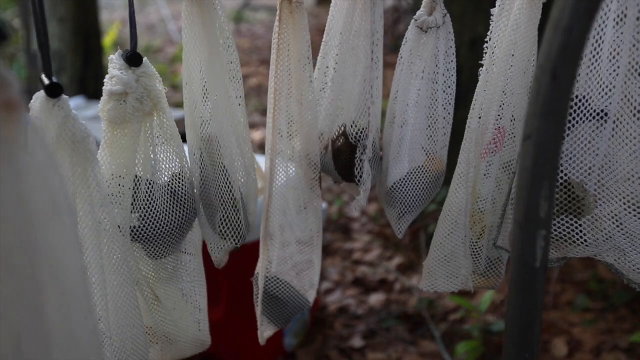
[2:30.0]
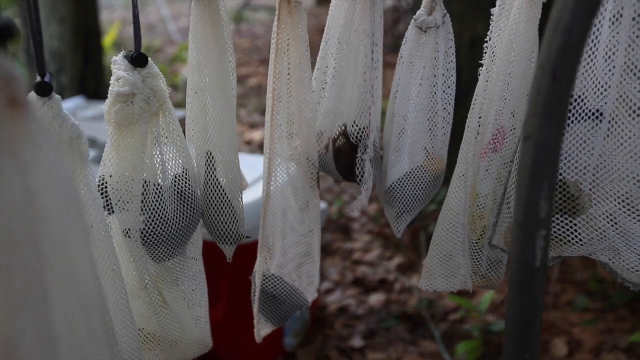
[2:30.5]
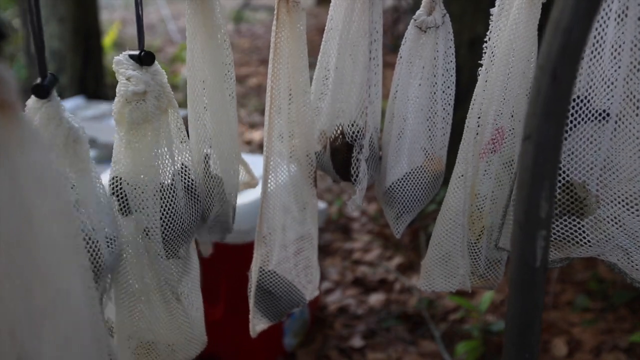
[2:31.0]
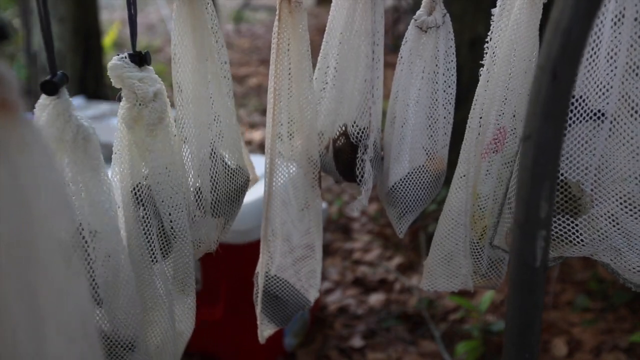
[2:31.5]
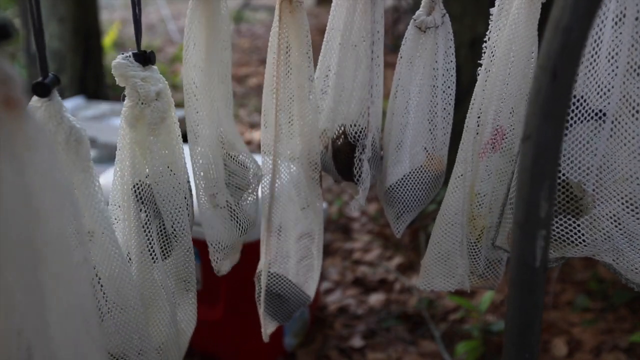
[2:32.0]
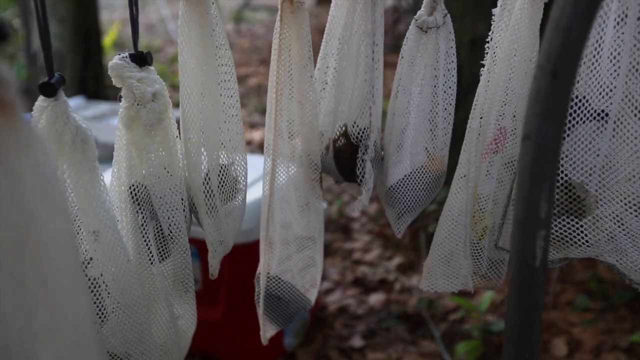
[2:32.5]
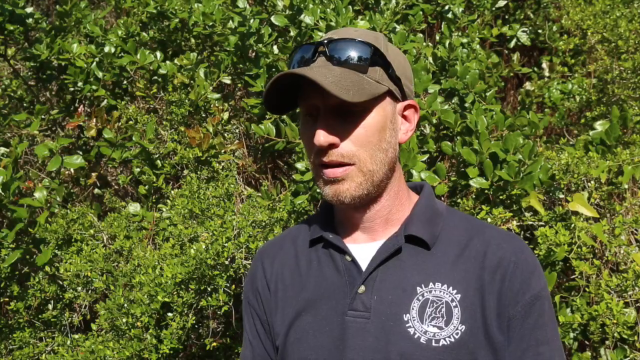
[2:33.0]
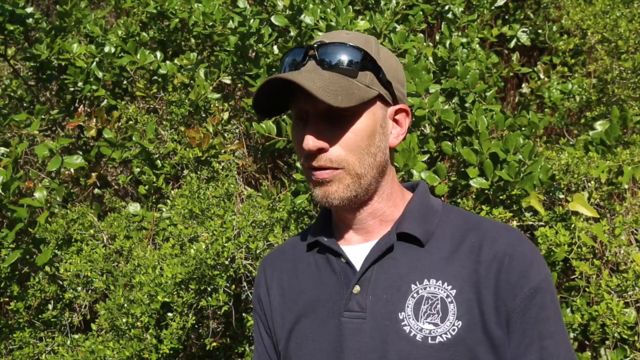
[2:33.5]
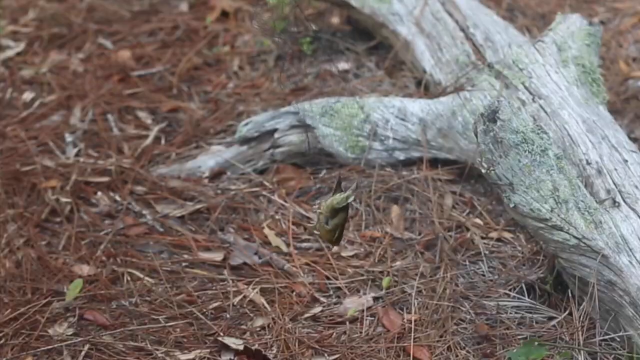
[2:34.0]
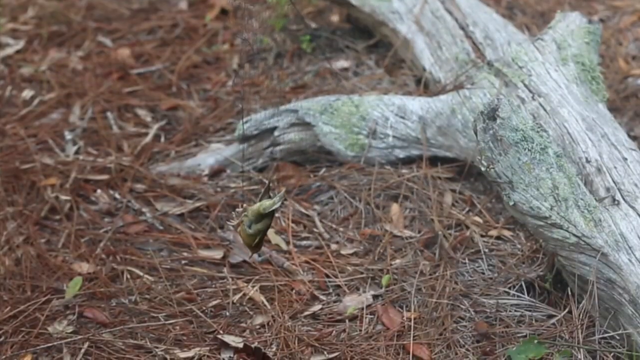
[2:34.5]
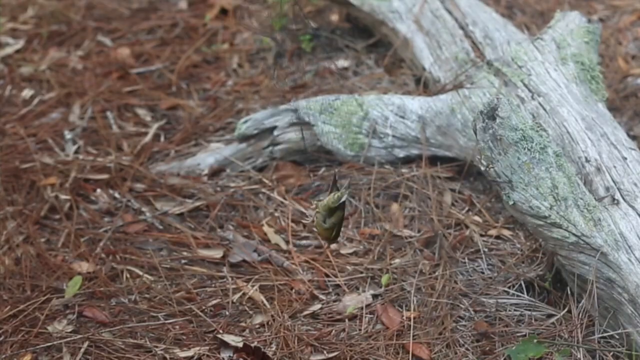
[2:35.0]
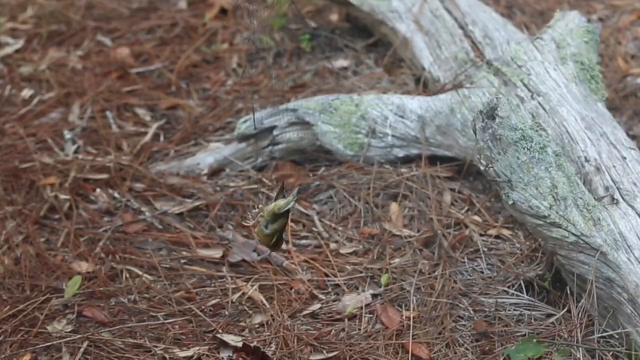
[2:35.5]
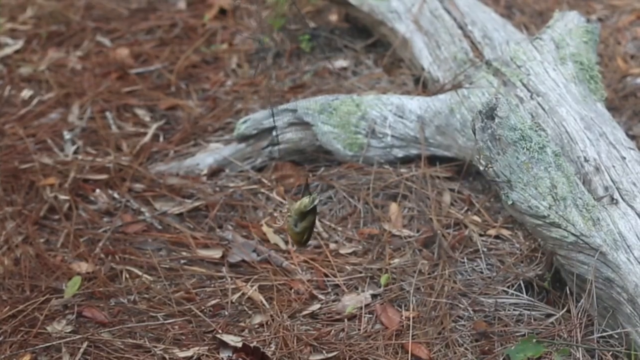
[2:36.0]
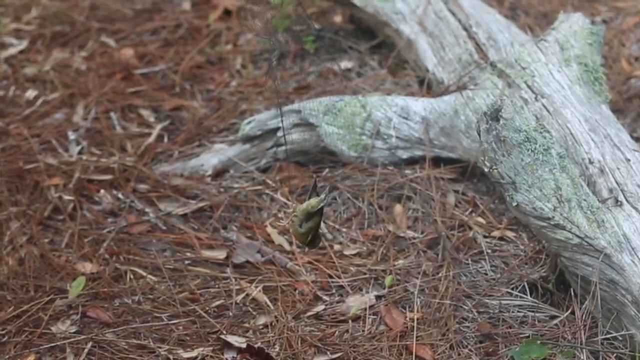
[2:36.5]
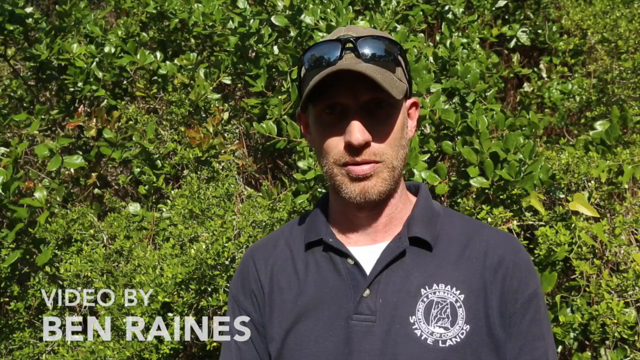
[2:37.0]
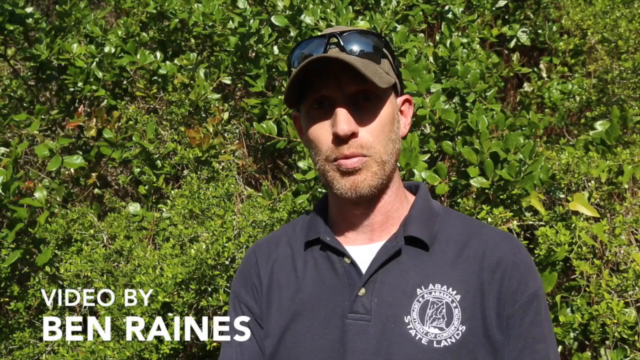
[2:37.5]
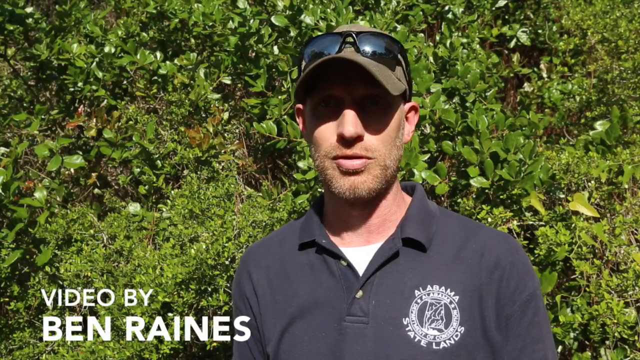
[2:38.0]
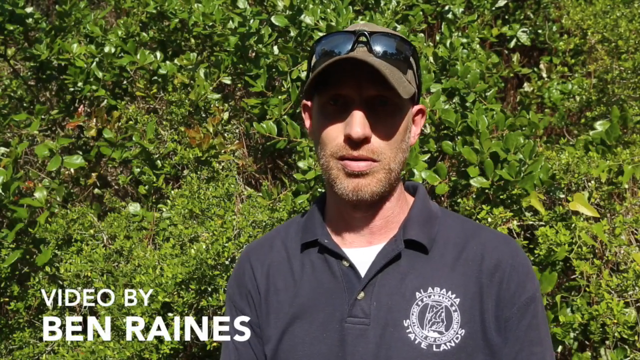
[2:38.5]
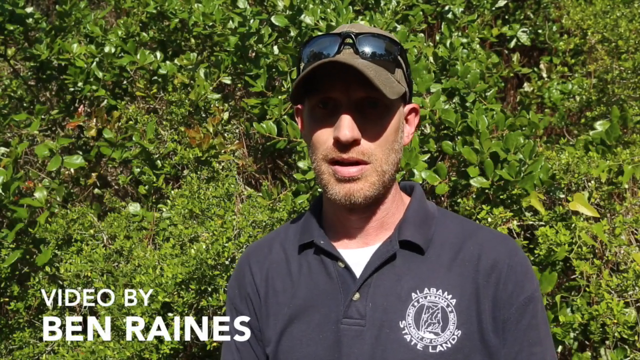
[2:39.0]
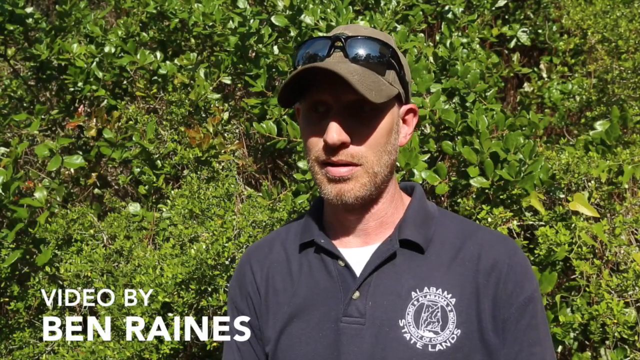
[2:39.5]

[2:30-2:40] White bags have little birds inside them, and a hand is visible; the birds move inside as they try to fly. The birds' heads face down in the nets, and text credits Ben Raines. One bird is not in a net but is hung by its legs with its head facing down. A man is still explaining at the end.